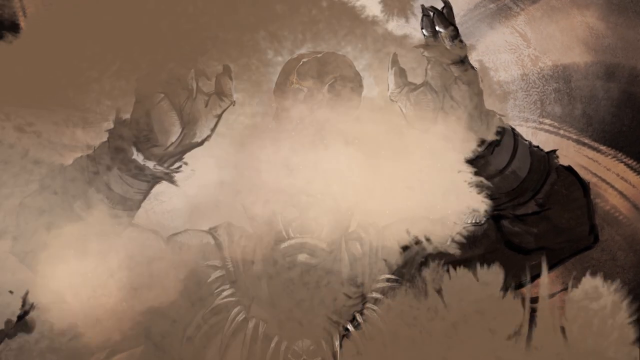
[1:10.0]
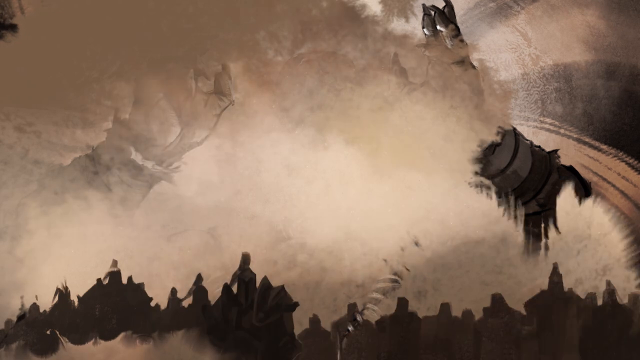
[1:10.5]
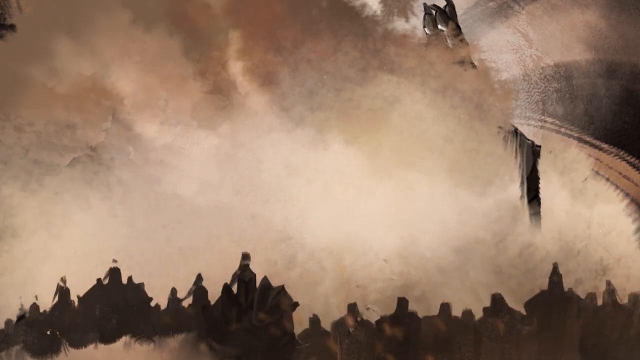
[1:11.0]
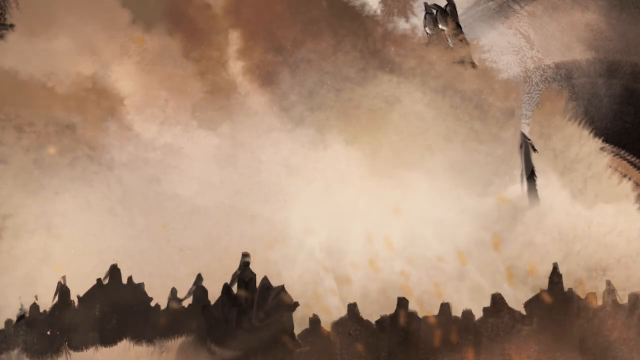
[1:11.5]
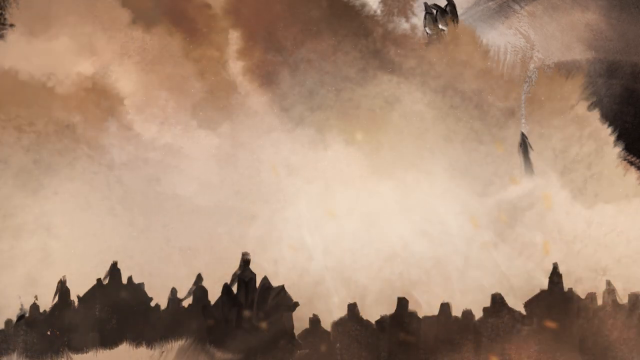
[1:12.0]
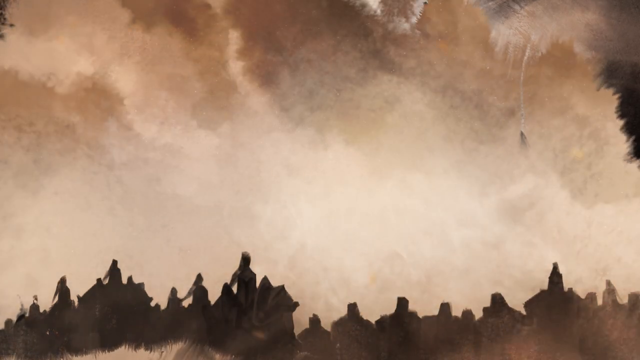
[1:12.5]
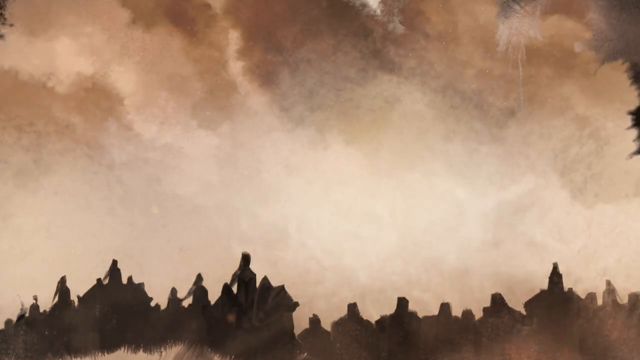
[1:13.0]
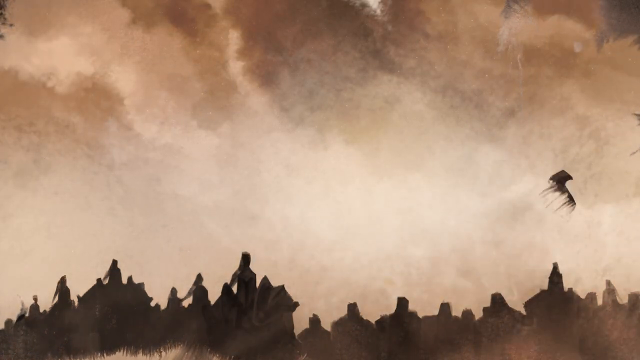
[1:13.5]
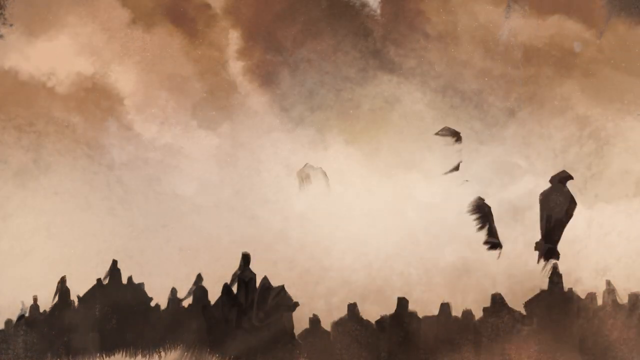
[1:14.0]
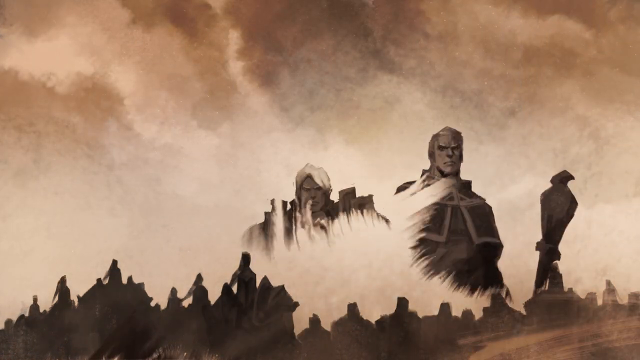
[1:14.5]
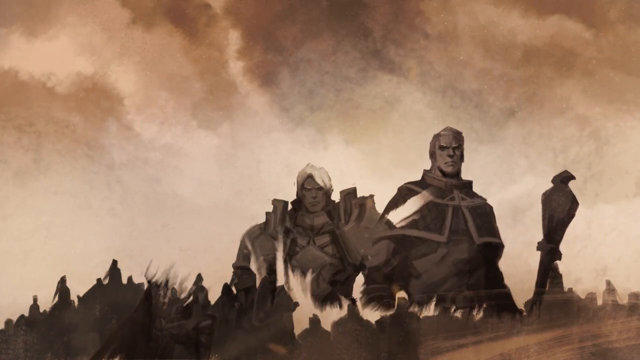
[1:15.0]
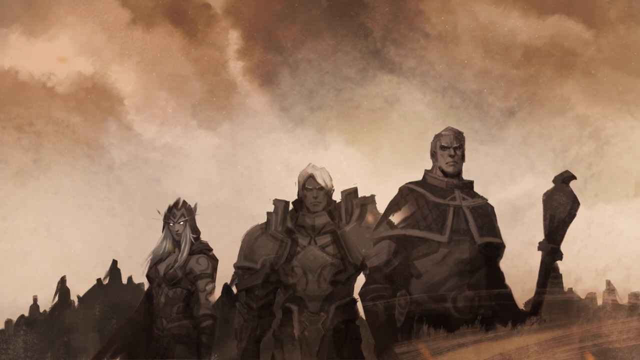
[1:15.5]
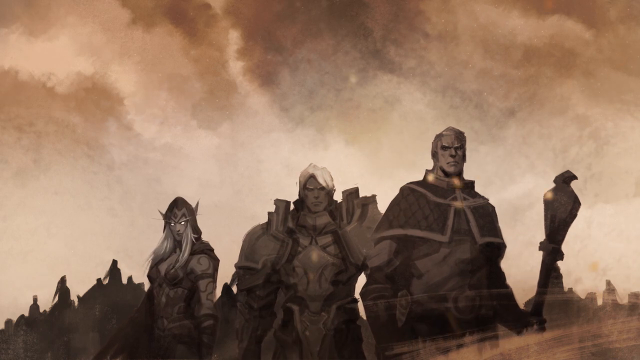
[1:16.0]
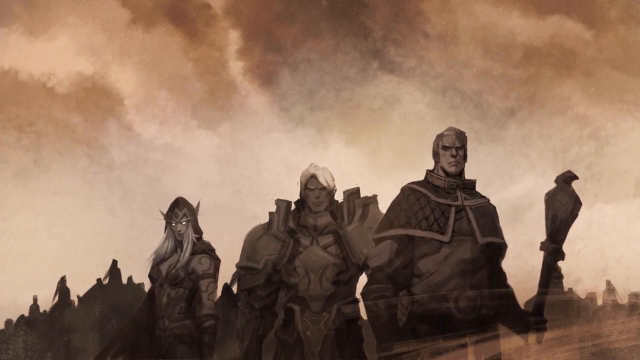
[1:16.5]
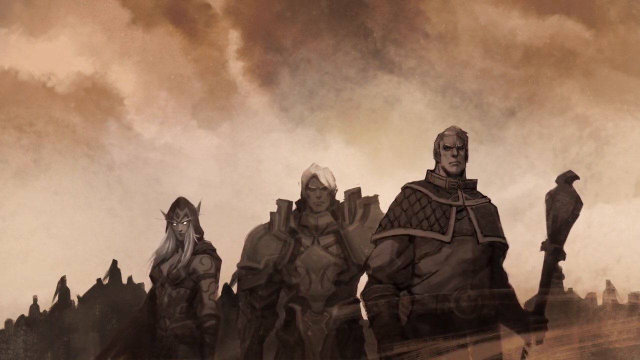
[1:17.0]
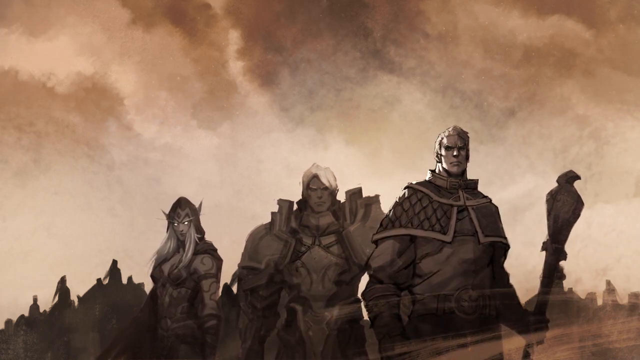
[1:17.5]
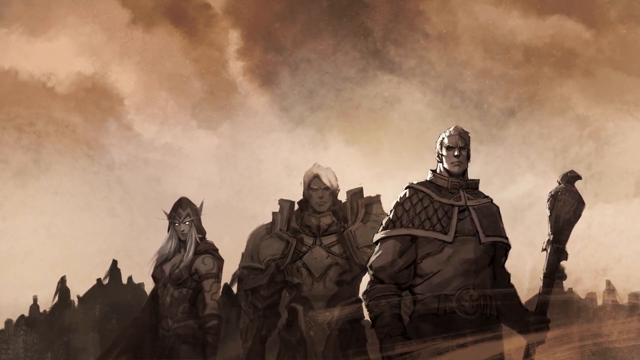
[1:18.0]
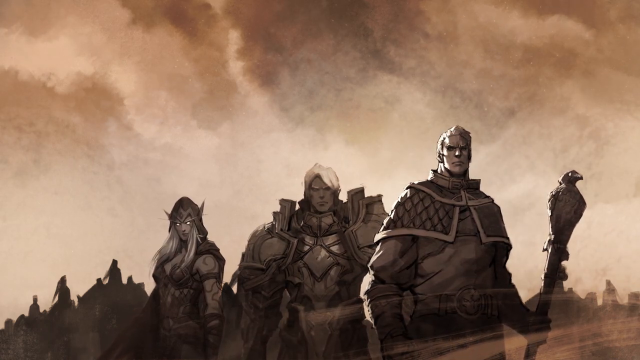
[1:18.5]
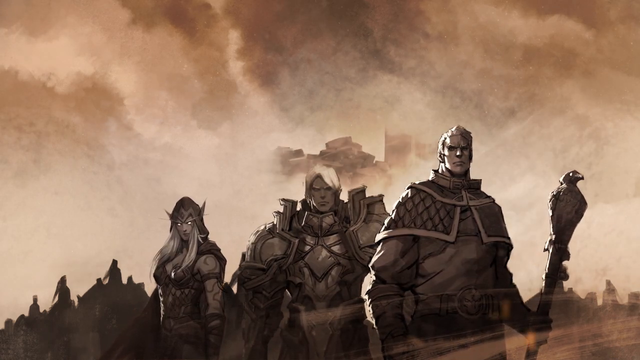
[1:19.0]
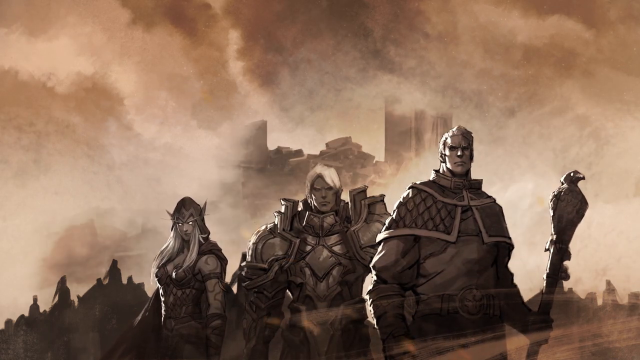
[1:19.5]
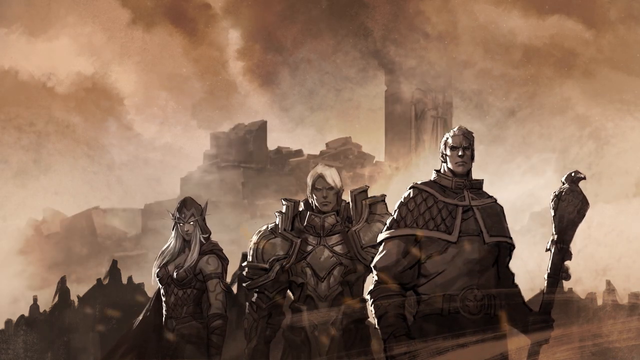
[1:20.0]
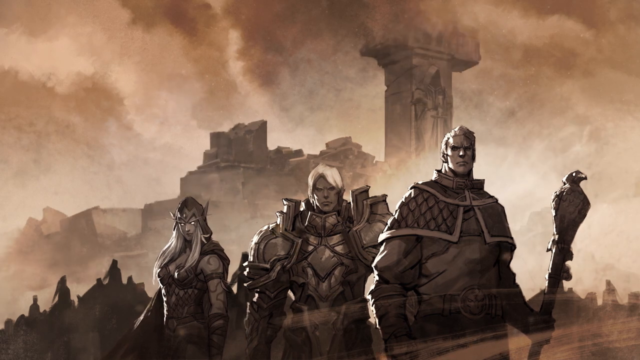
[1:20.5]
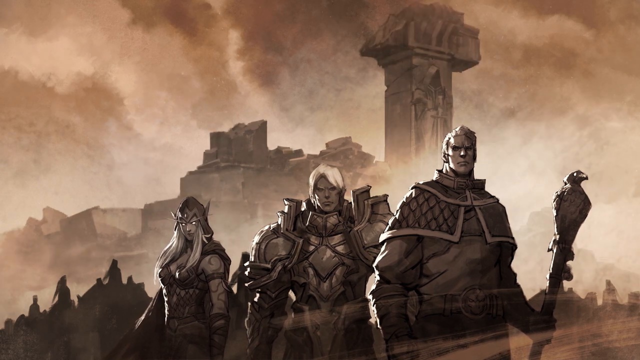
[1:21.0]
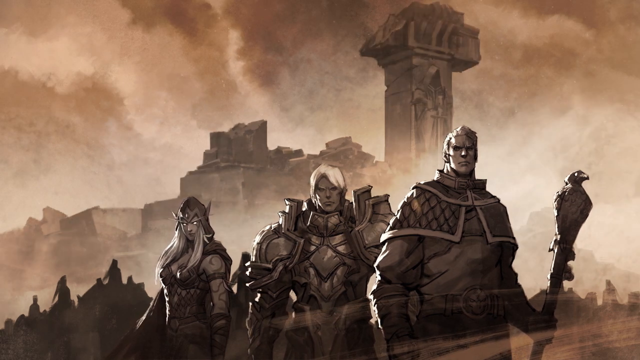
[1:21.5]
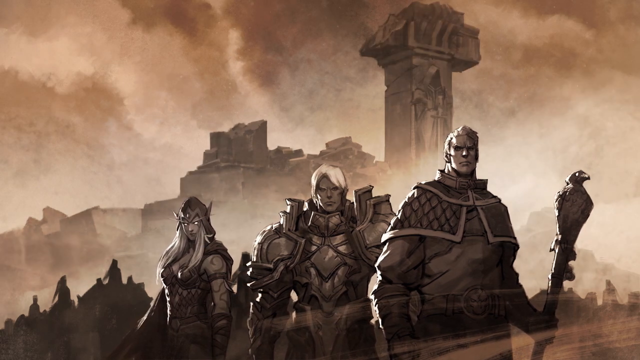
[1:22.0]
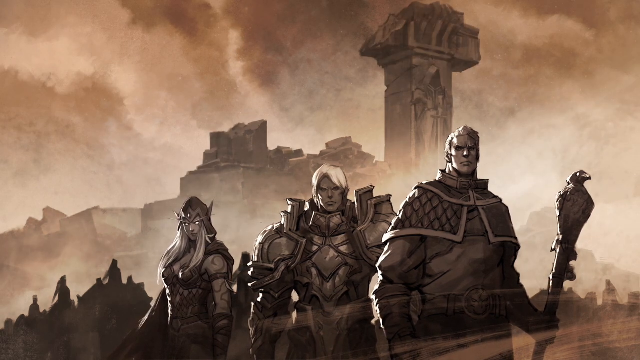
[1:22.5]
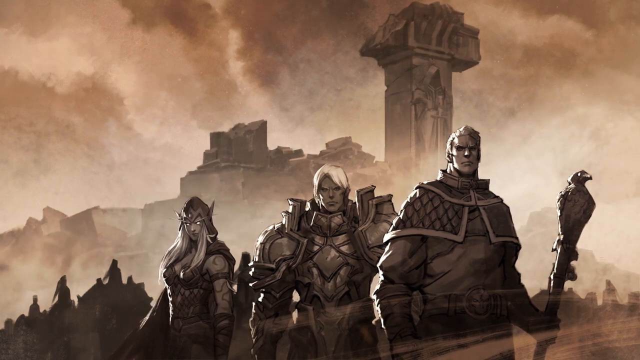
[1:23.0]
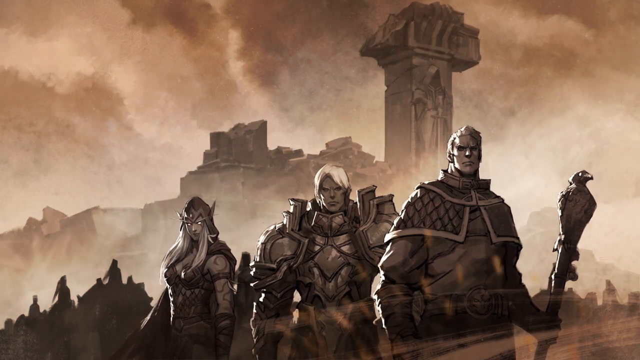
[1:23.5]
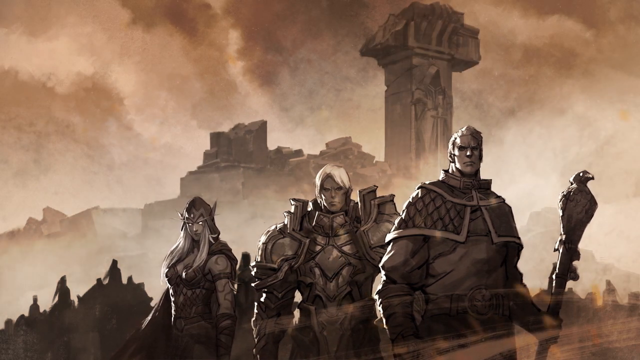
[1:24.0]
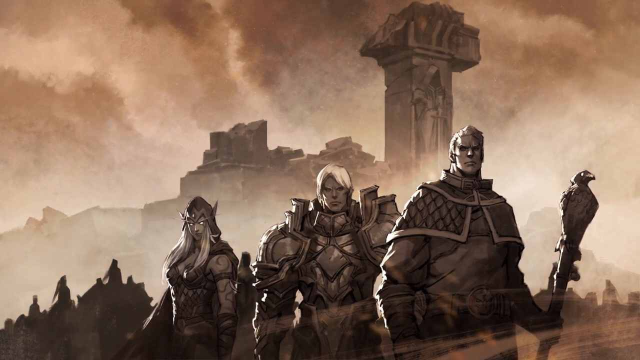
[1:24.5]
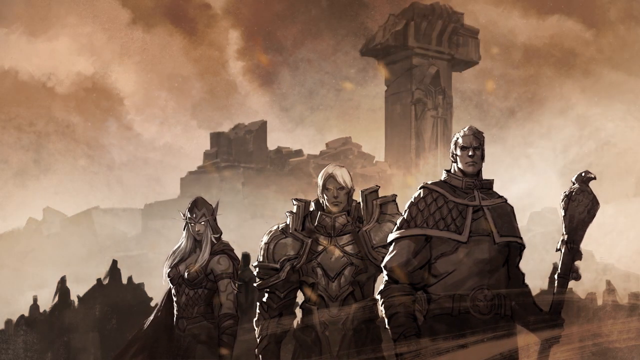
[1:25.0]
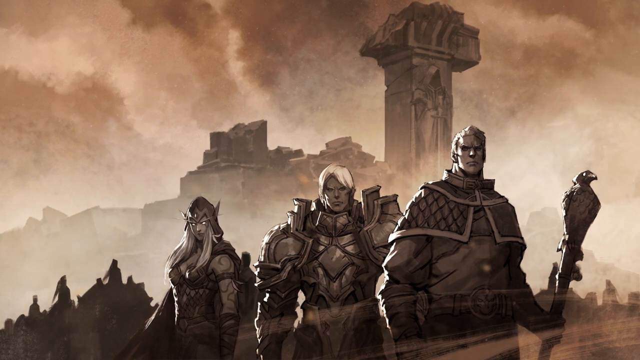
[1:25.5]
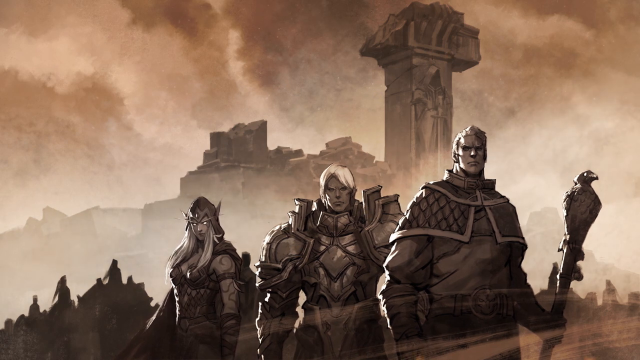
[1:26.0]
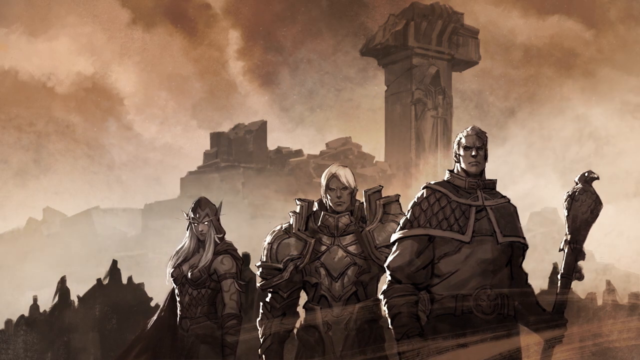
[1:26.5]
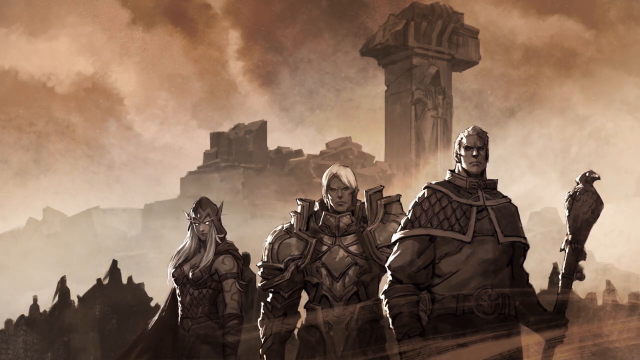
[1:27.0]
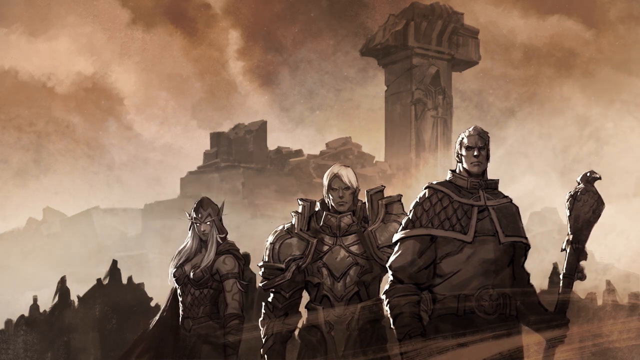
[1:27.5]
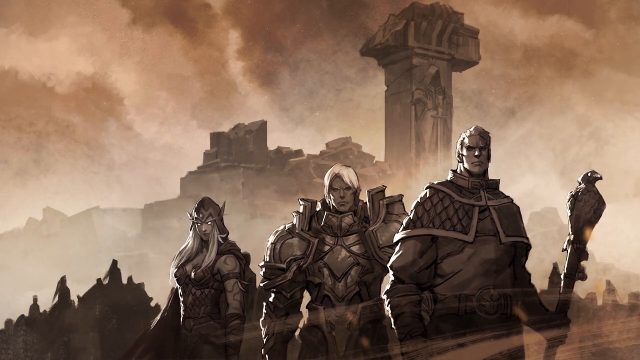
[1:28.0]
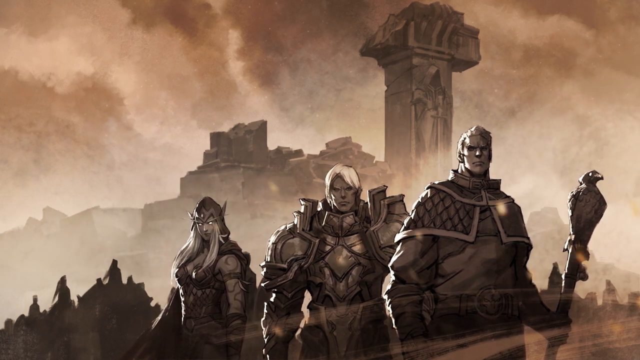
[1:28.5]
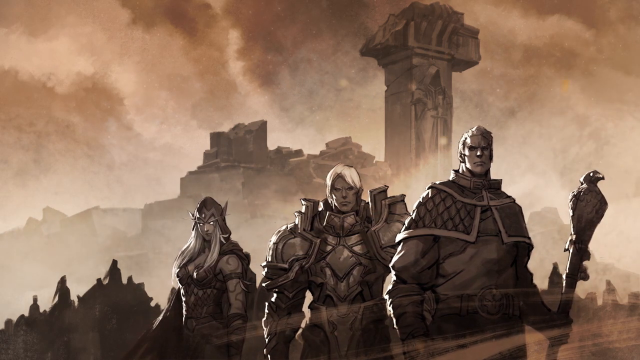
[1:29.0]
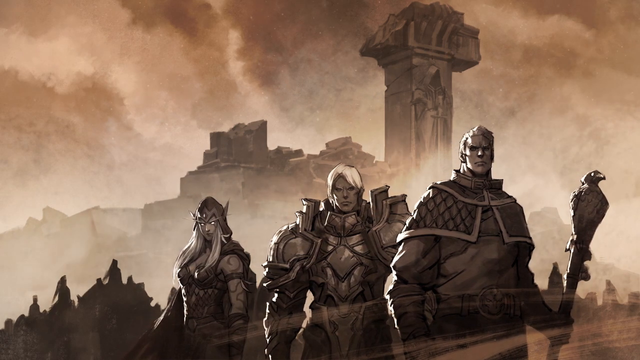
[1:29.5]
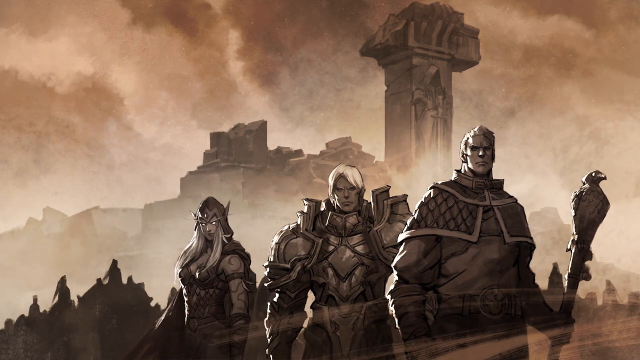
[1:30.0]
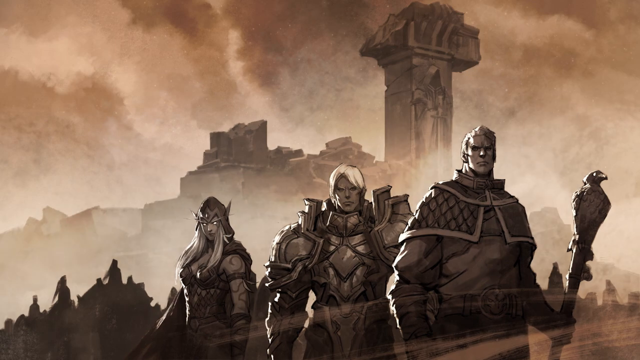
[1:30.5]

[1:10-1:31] The next image begins with what looks to be mountains at the bottom of the image; the sky and everything else are a sandy tan color, while the mountains are dark. Three warriors then appear. One is clearly a mage, holding a staff with an eagle on it. The one in the middle is big and buff with shoulder armor and seems to be a sword or claymore user. To the left of him is a slender elf woman of unclear class, possibly a magic user, though she also looks like she could be holding a shield in her right hand. The figures get drawn in, with some shadowing. Then the ruins of the portal appear behind them, almost as if they are traveling towards the portal.